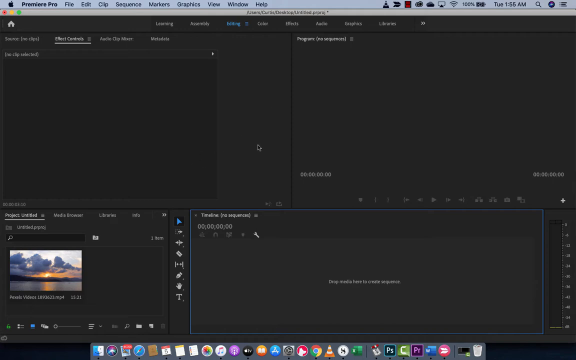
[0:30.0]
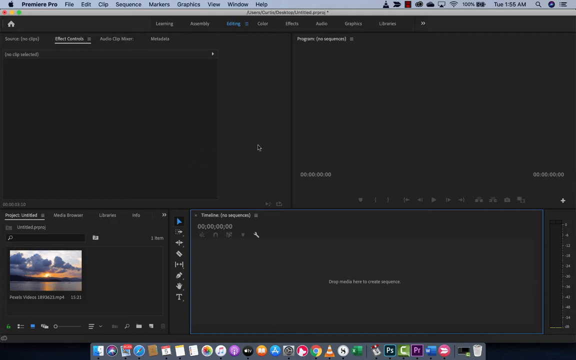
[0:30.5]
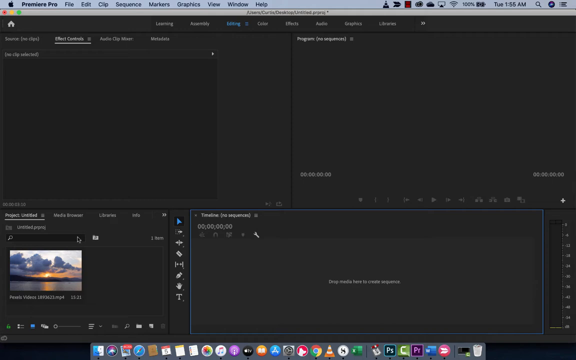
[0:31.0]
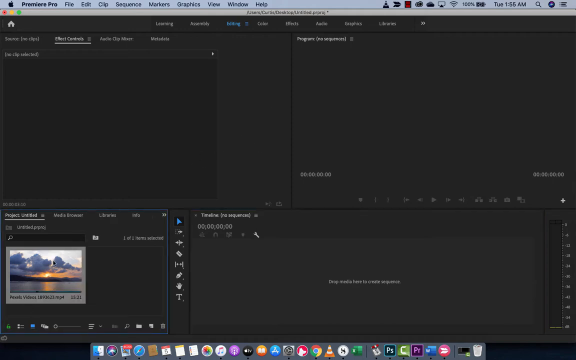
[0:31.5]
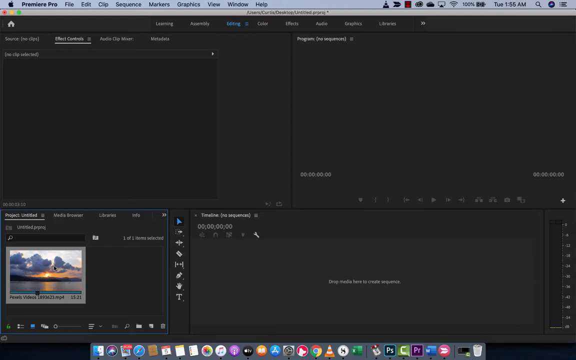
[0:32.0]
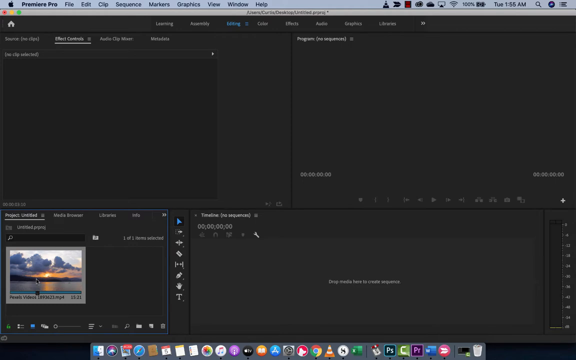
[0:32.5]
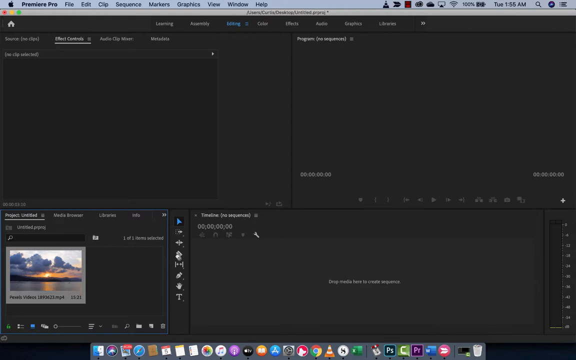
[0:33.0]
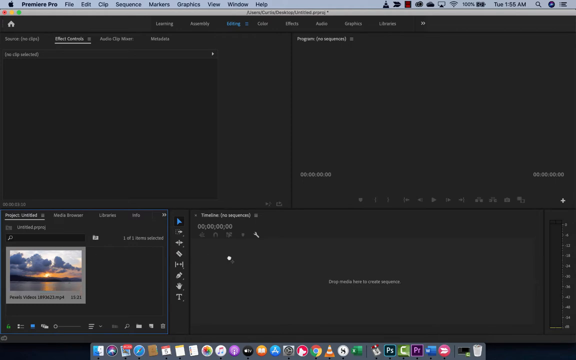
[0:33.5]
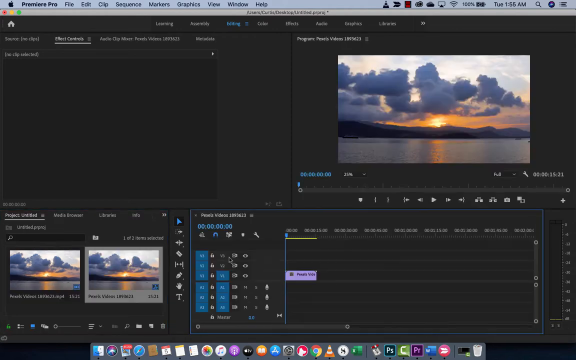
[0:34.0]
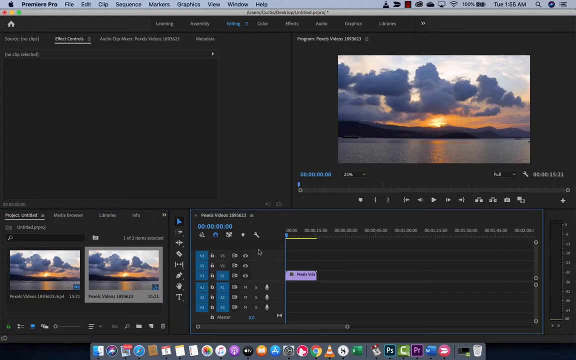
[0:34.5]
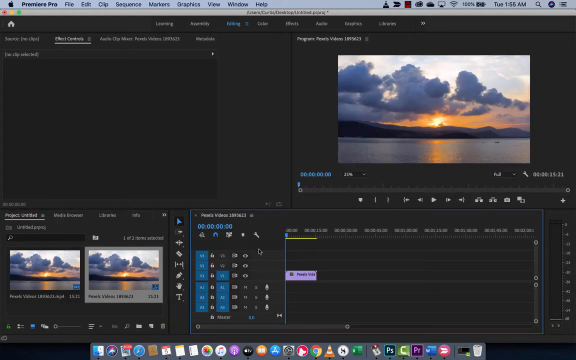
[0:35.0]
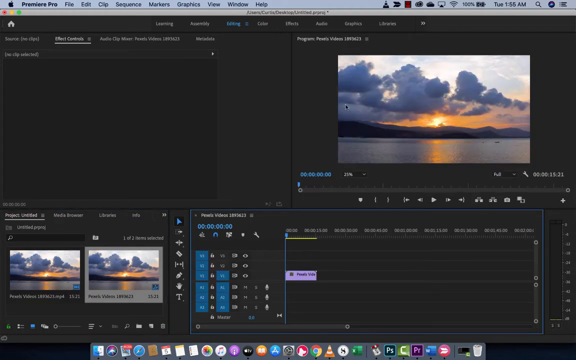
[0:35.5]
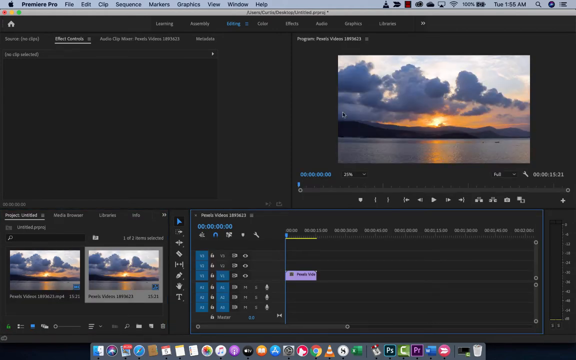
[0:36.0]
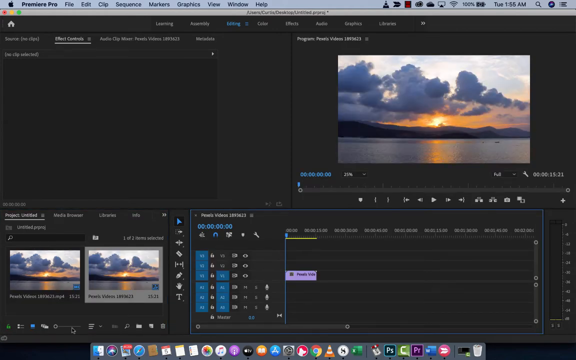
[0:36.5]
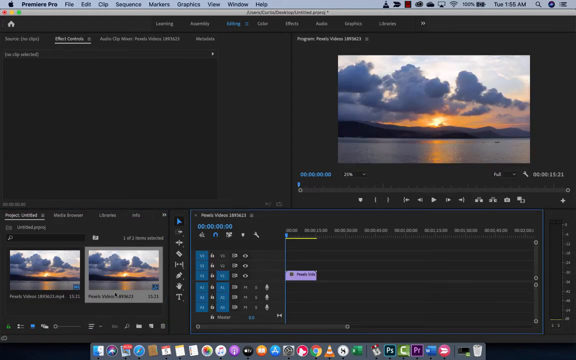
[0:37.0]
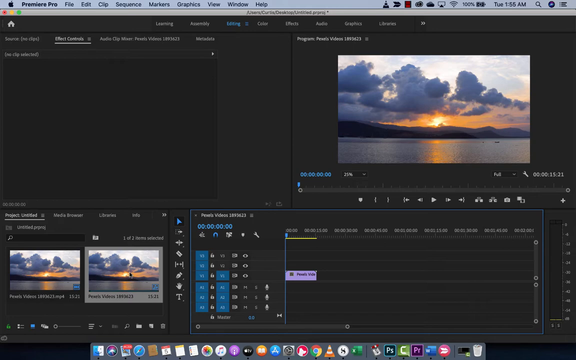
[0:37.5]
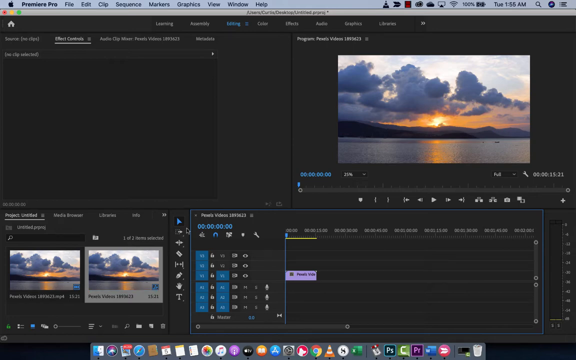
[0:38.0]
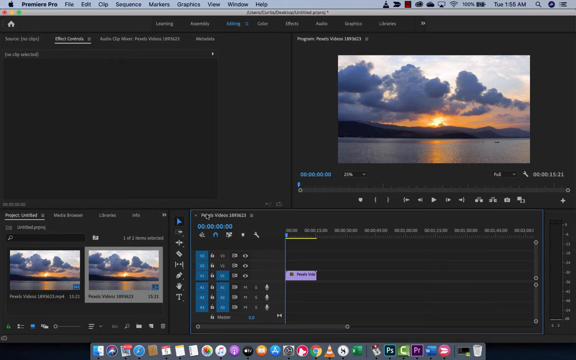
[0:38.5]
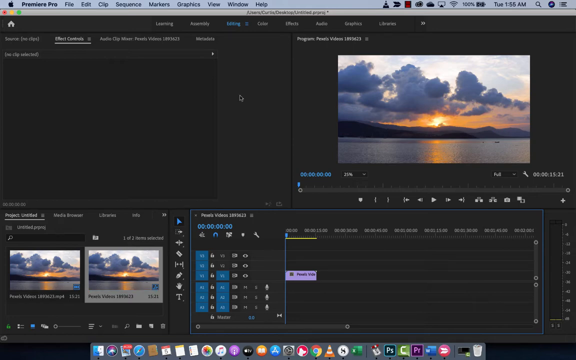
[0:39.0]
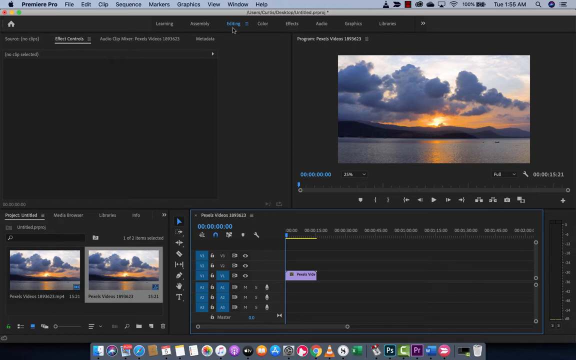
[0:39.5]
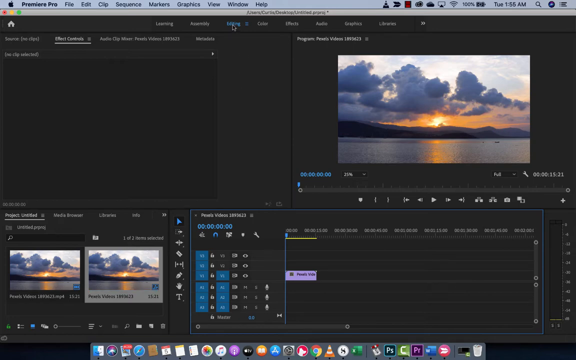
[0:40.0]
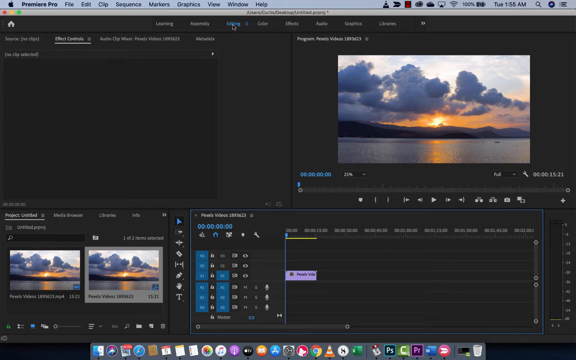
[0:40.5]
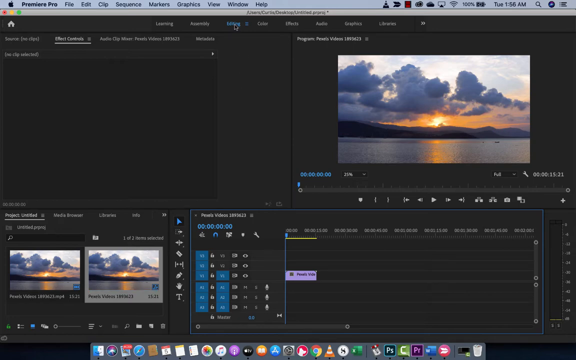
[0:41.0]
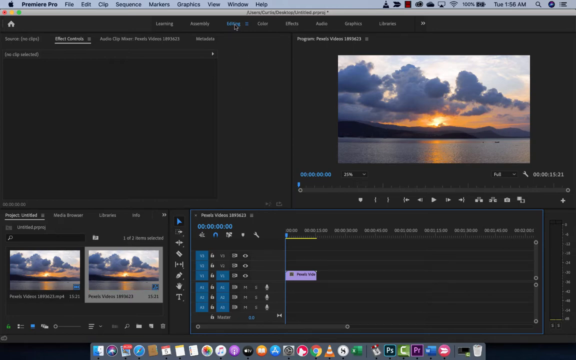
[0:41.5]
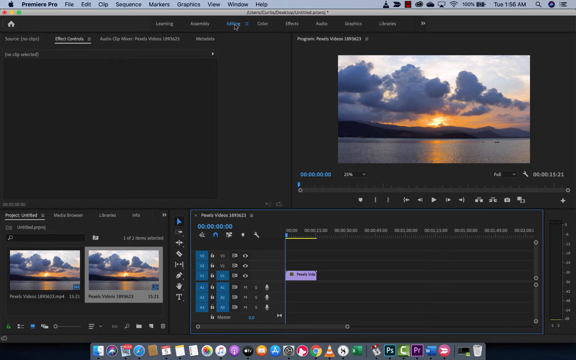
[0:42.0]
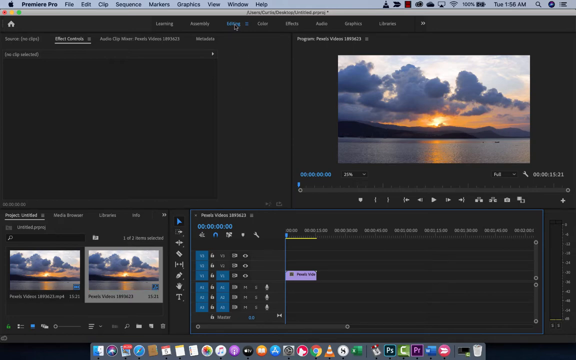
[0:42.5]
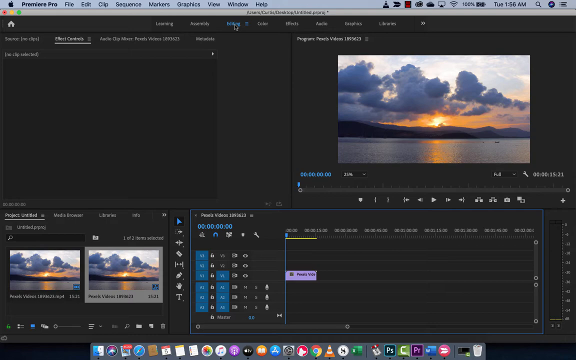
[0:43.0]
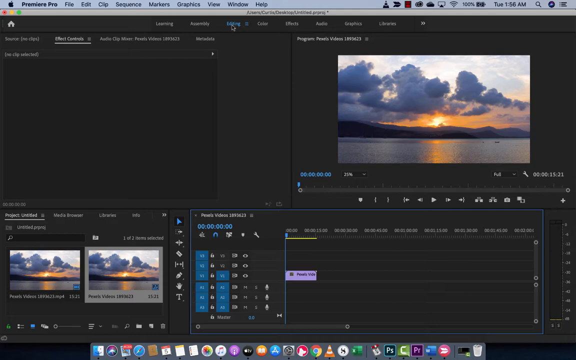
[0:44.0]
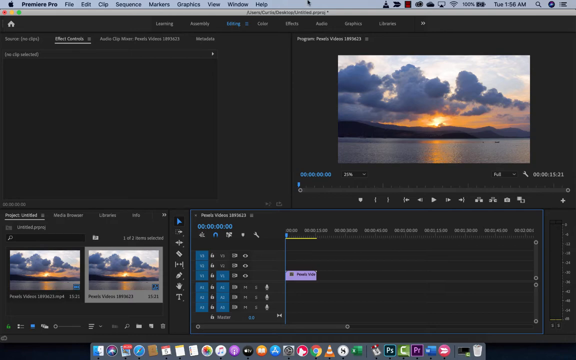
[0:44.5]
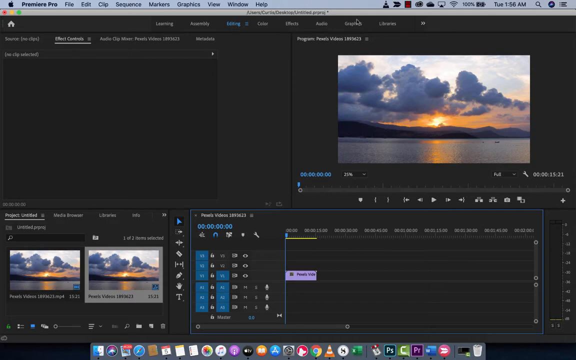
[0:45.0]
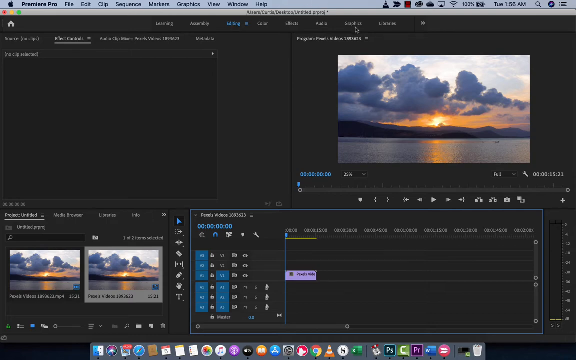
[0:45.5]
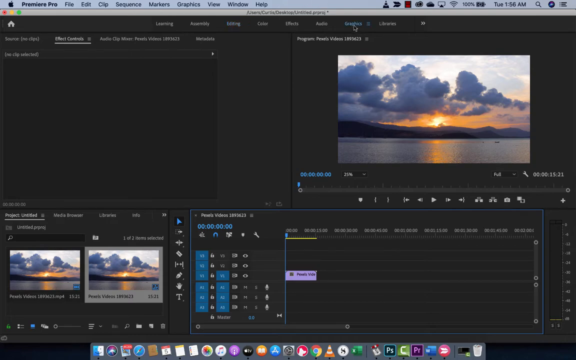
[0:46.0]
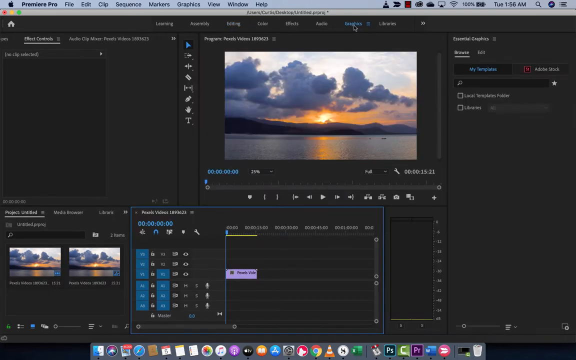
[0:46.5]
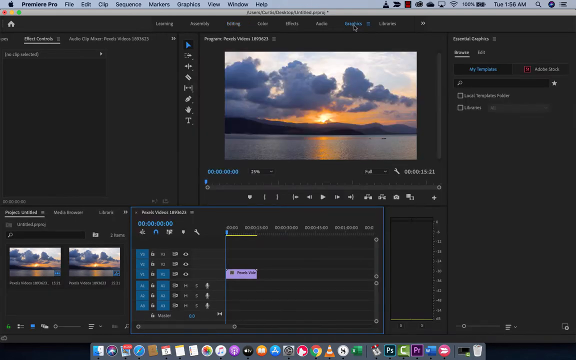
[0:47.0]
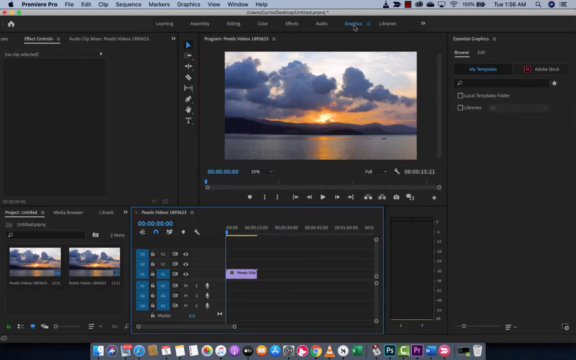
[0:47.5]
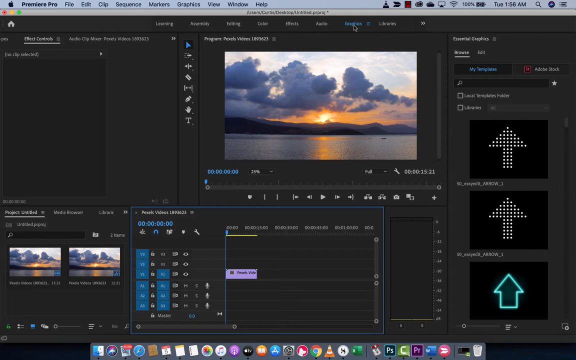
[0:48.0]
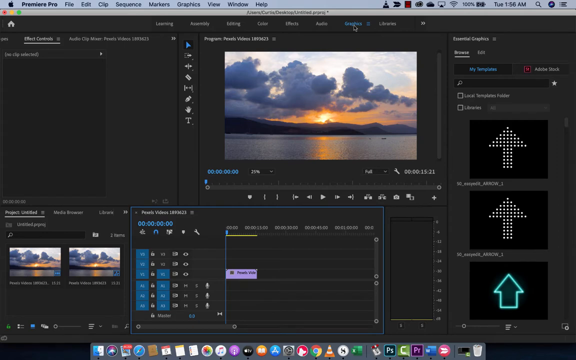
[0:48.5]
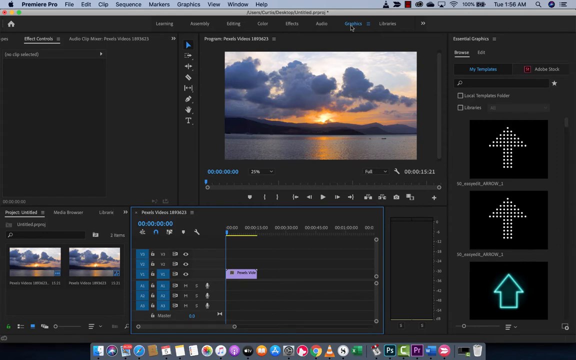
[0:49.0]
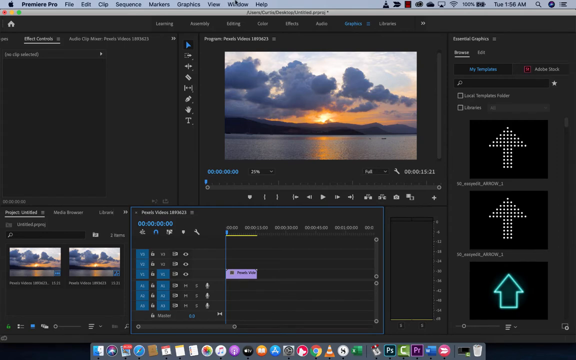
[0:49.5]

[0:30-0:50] The top of the screen shows the program is "Premiere Pro". The screen is primarily gray with many different boxes. In one at the bottom left is an image of a sunset, with clouds in the sky and water. Another box has a blue highlight around it, and a mouse cursor is at the center of the screen. The cursor highlights the scenic image, and that box turns blue. The cursor then moves to the right of it, after which the image appears at the top right and settings appear at the bottom. The cursor goes up and to the right over the image, then returns to the bottom left to a smaller version of the image. It then goes back to the top, highlights "editing", and then highlights and clicks "graphics", which makes the page quickly change and reveal new options, especially on the right side.